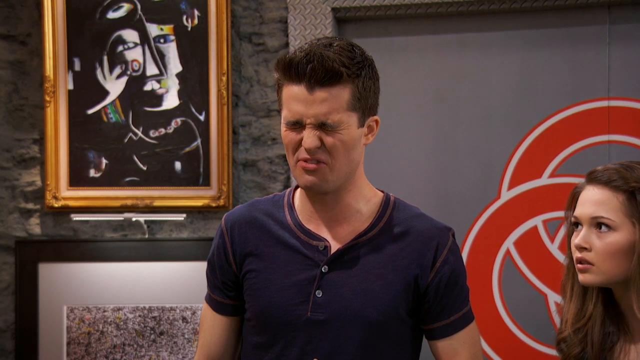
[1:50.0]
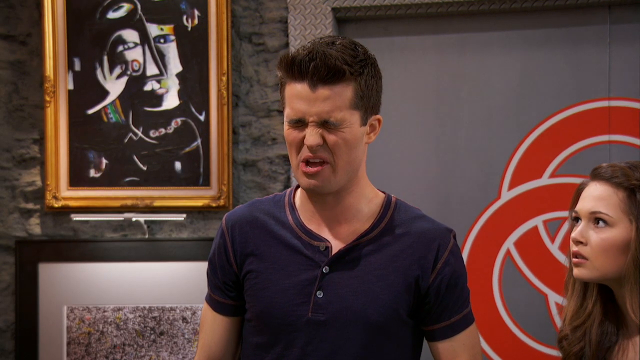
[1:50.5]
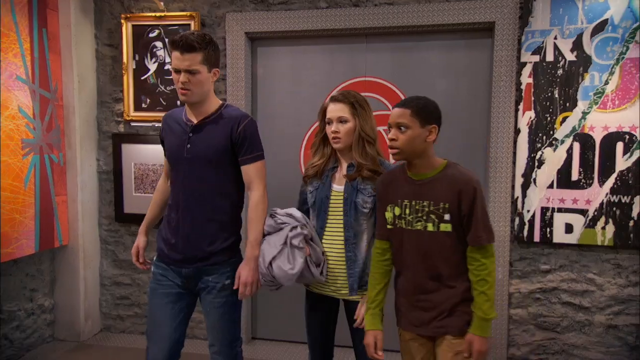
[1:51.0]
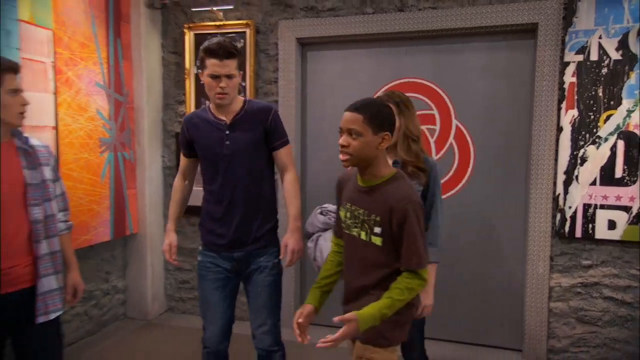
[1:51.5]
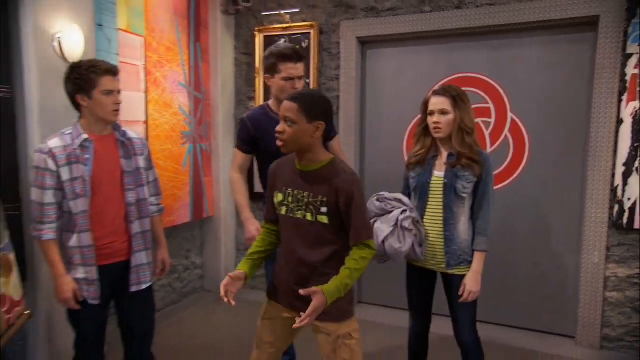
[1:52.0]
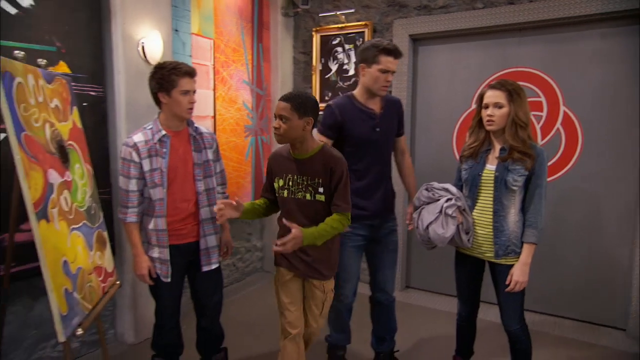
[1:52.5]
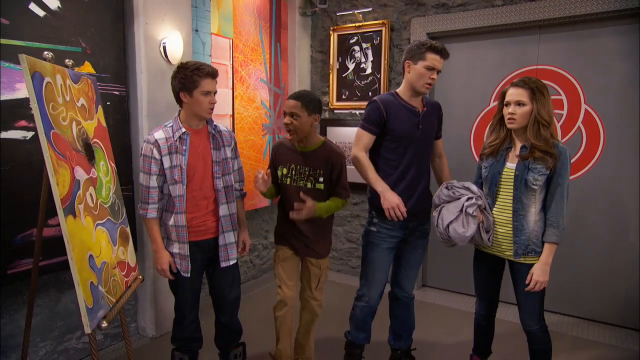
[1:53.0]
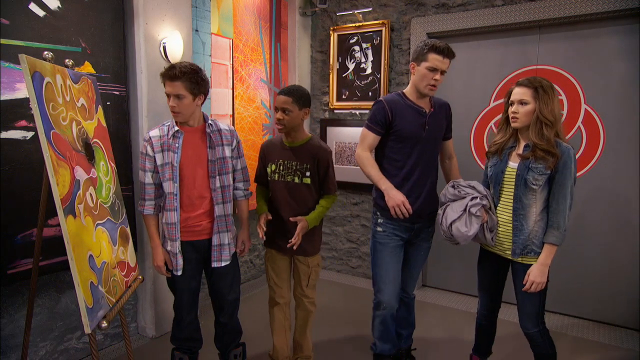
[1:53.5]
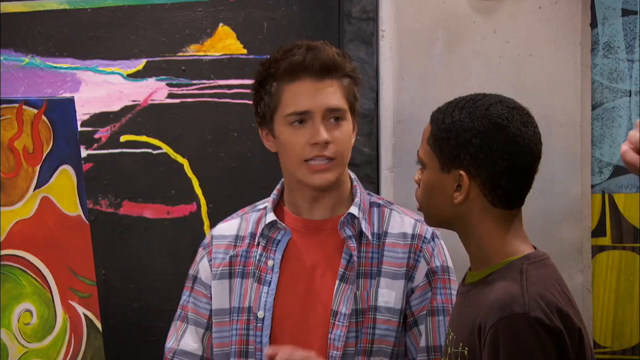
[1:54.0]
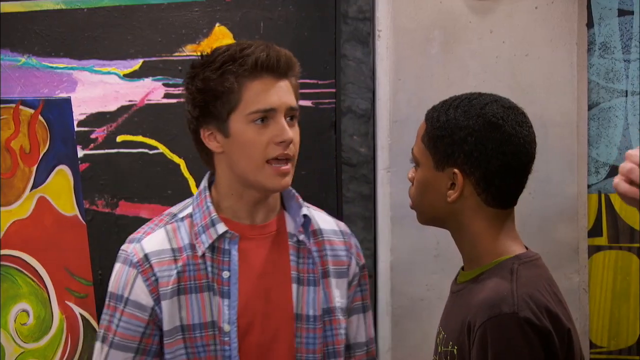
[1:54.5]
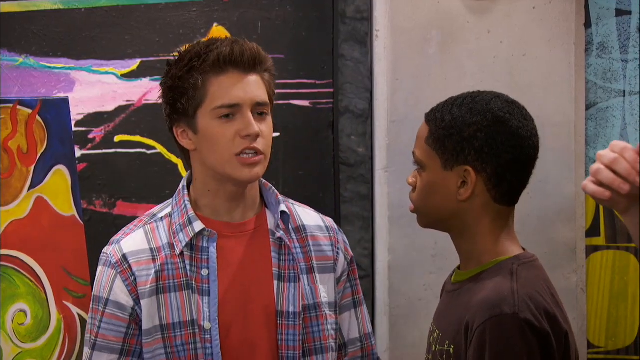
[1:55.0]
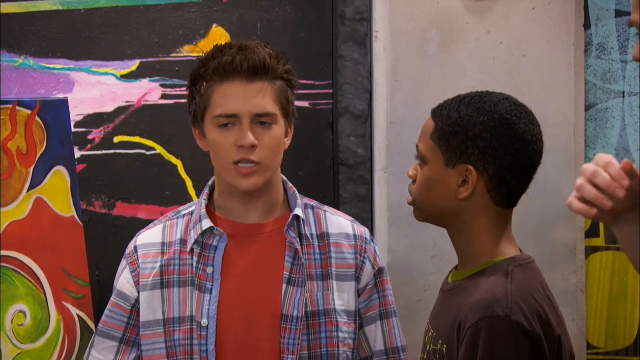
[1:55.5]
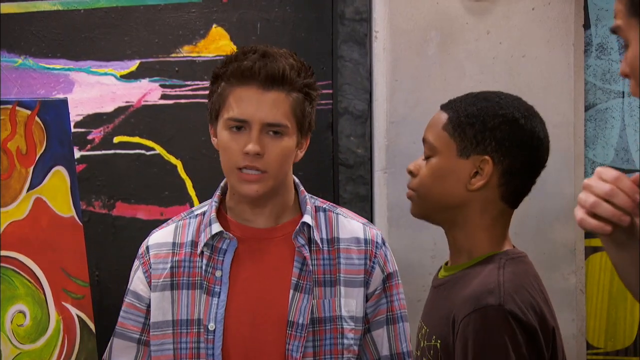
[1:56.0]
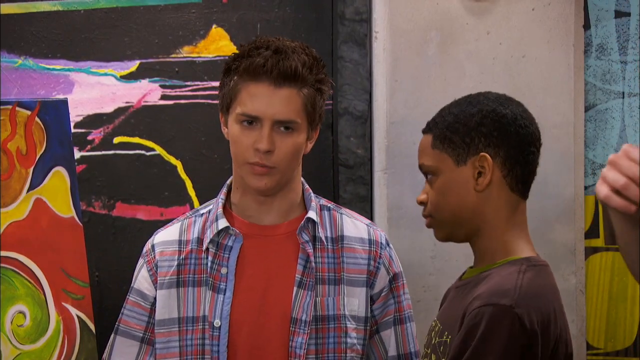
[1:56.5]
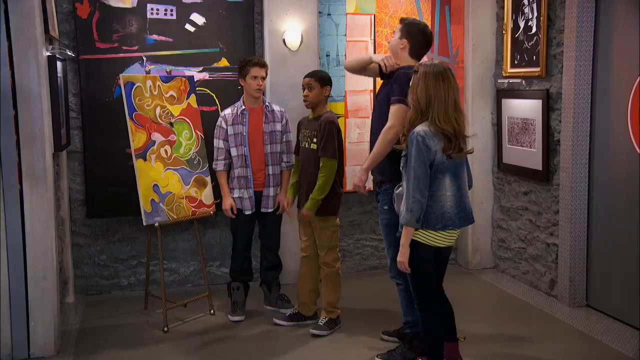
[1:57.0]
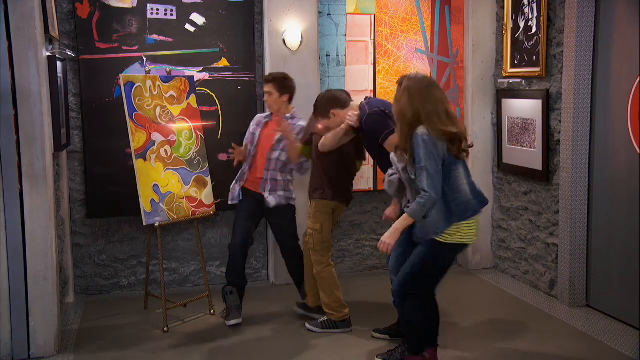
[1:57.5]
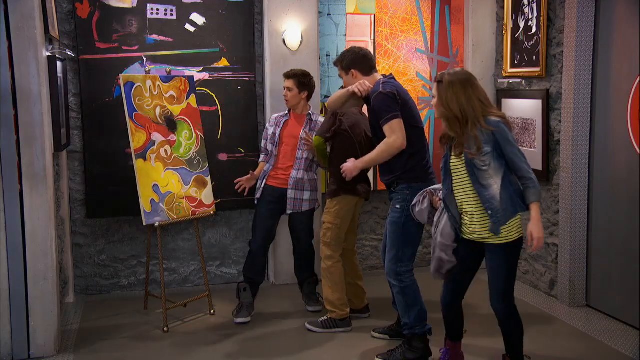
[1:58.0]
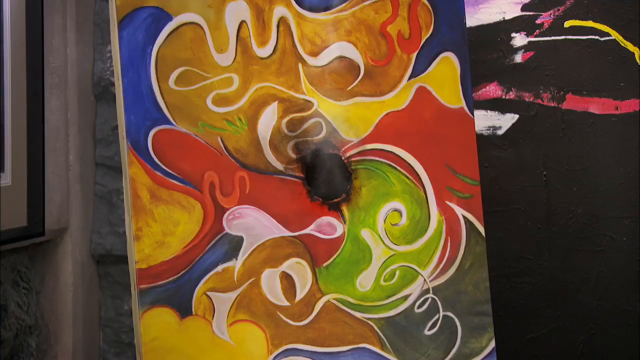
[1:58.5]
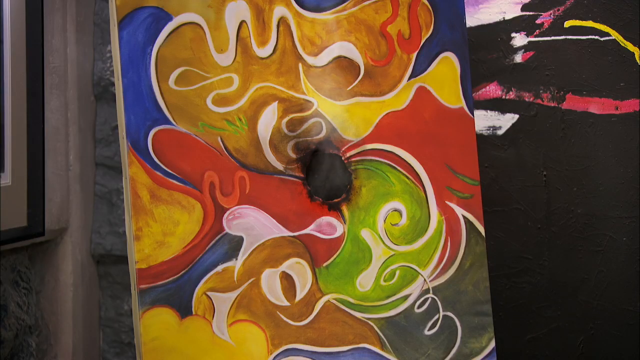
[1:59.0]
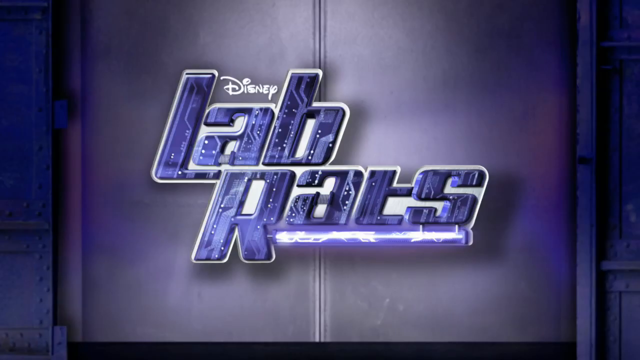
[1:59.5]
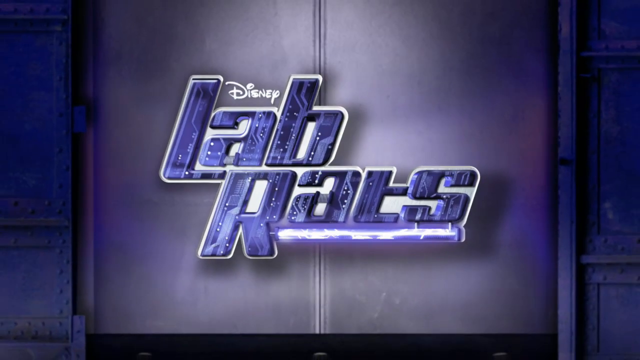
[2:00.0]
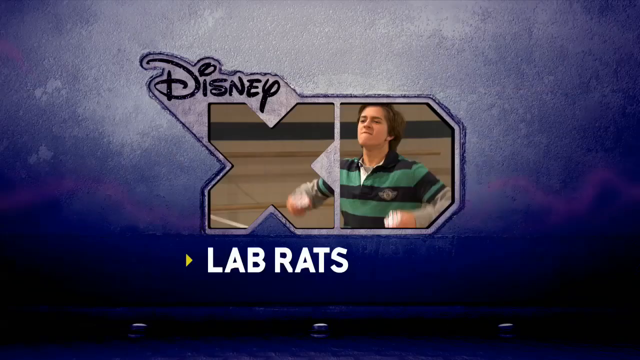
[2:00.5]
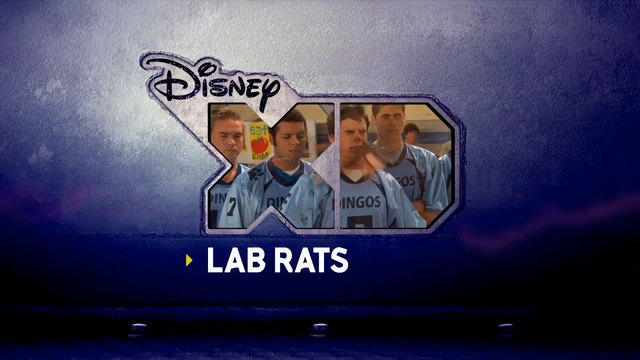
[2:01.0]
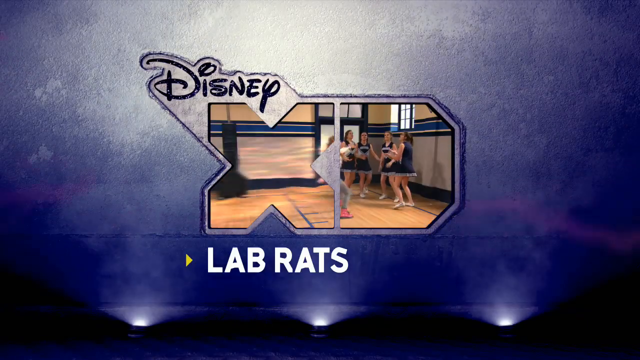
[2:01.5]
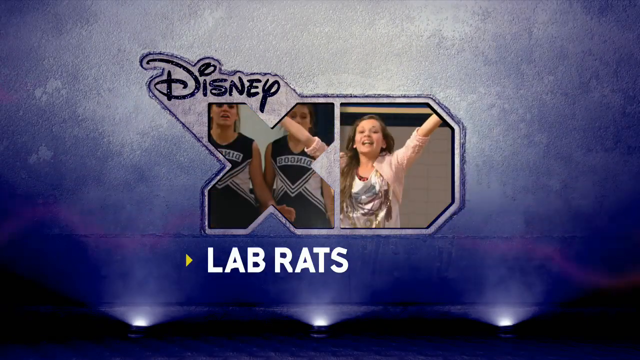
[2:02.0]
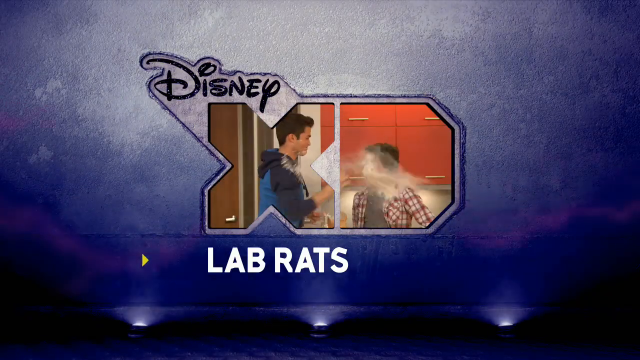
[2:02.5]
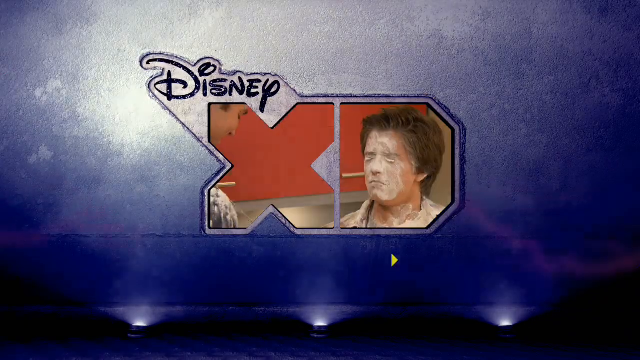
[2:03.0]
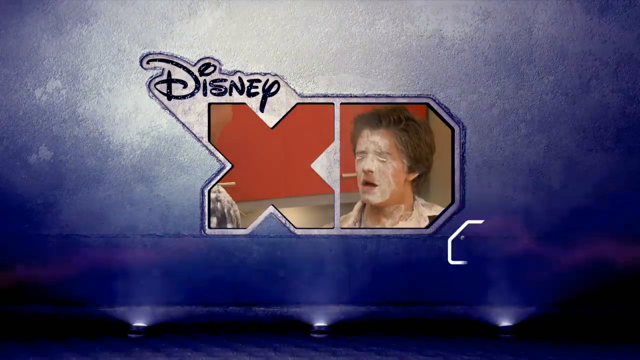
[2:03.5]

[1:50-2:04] The three teens point at the canvas and talk to one another about the hole, and the boy in the brown shirt steps forward, seeming concerned. The boy in the plaid shirt stands to his right, directly in front of the painting. The girl has taken a step back, and the young man who sneezed is standing next to her, holding his hands up at his sides and rubbing his face as though preparing to sneeze again. The two boys discussing the hole step to the side and back as the young man turns as though he is going to sneeze. He leans forward with his arms as though to cover his mouth, and the two boys jump out of the way. The sneeze is again a laser beam, which goes into the original hole and makes it three to four times its original size. The girl beside him seems amazed. They all step back to look at the damage. The video then moves to a title screen for the television show, called Lab Rats.